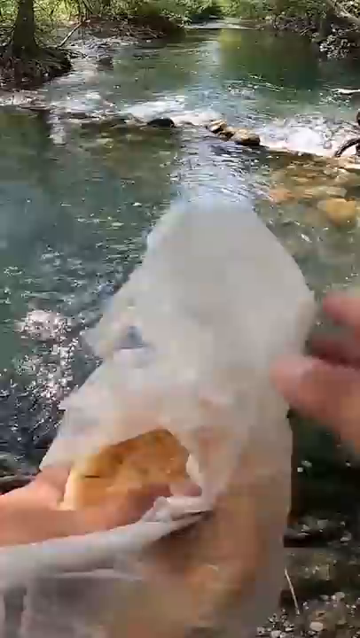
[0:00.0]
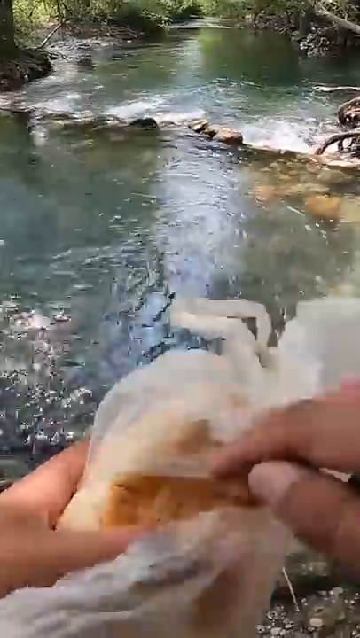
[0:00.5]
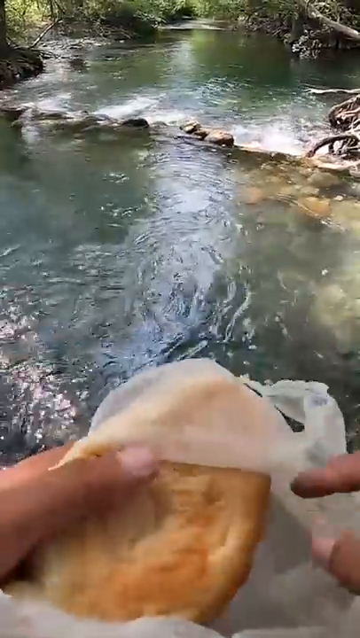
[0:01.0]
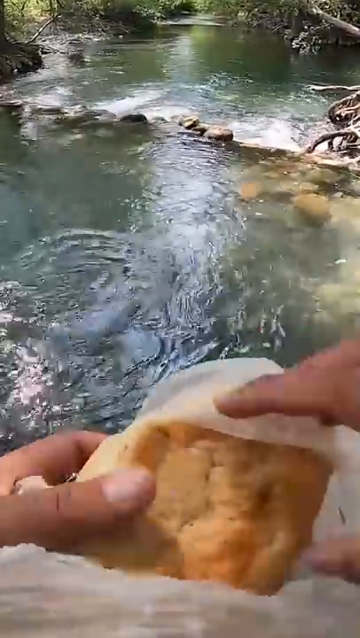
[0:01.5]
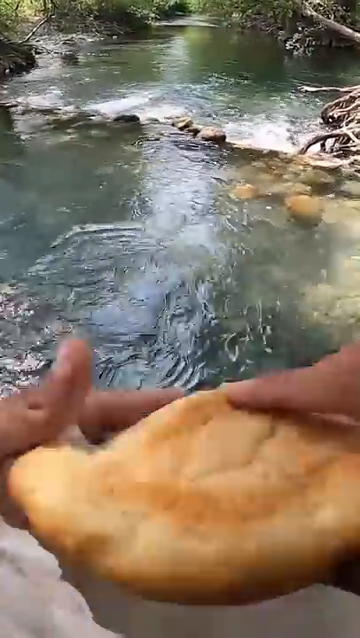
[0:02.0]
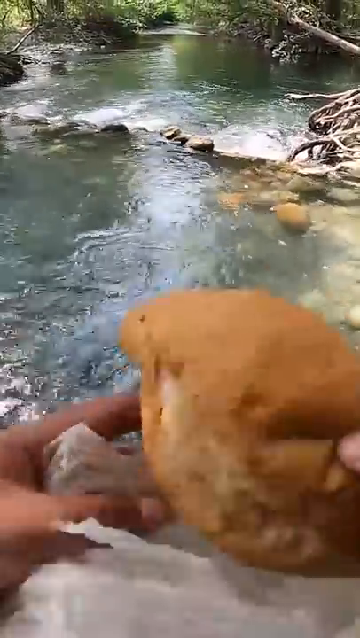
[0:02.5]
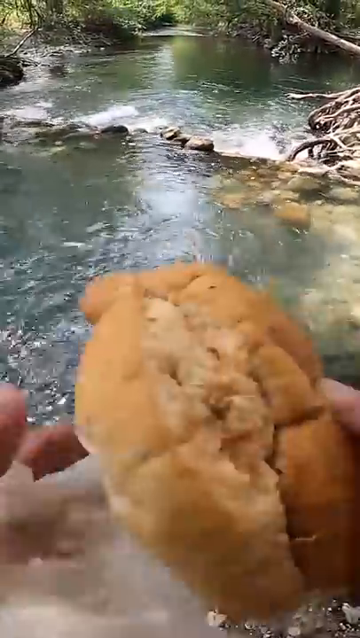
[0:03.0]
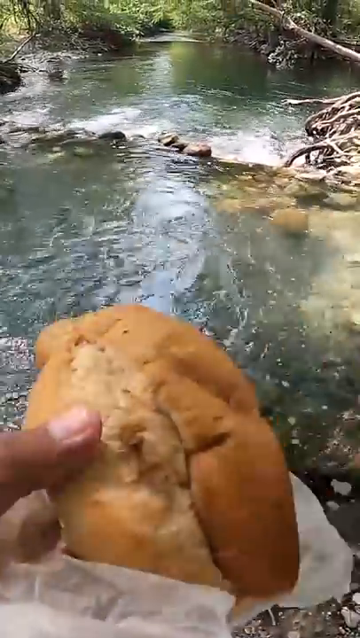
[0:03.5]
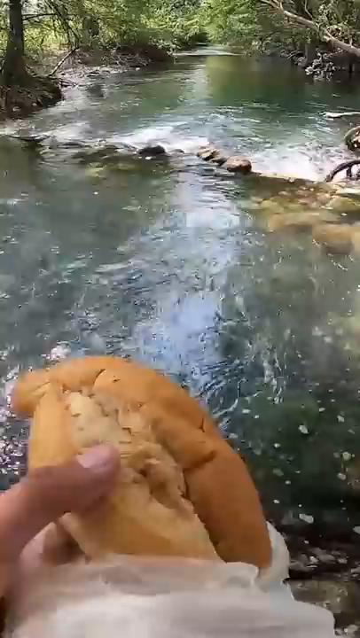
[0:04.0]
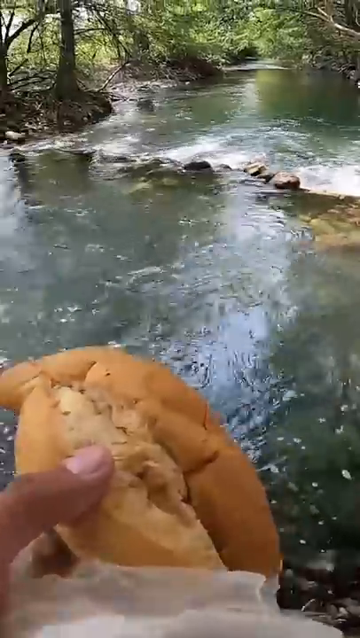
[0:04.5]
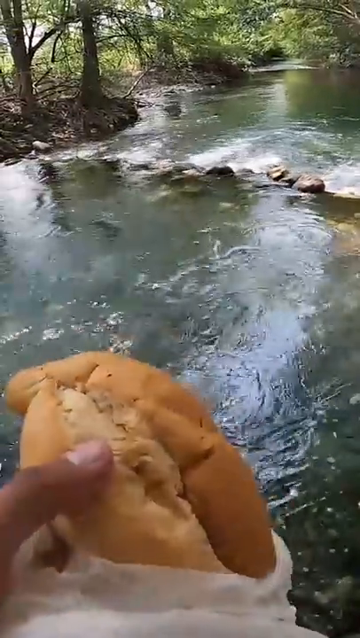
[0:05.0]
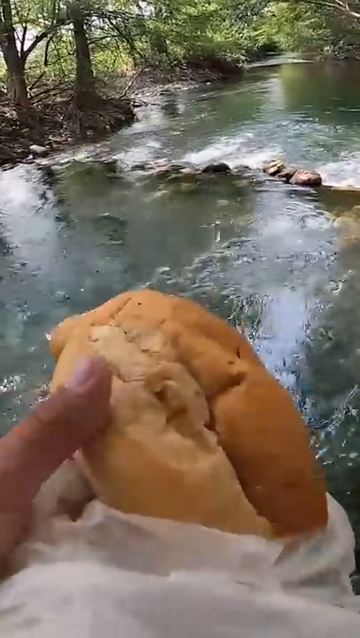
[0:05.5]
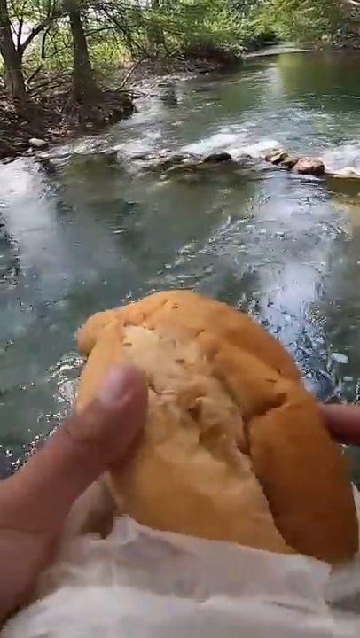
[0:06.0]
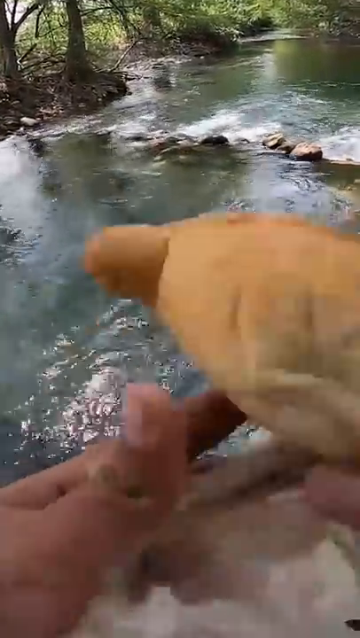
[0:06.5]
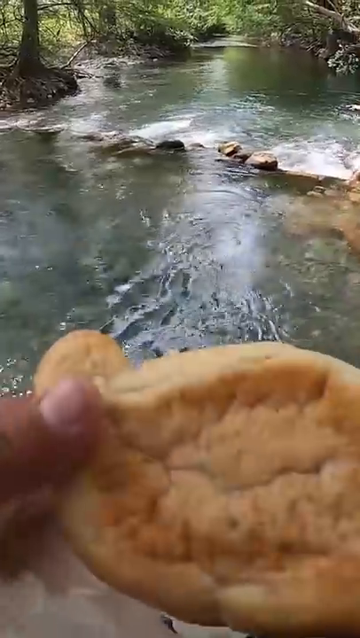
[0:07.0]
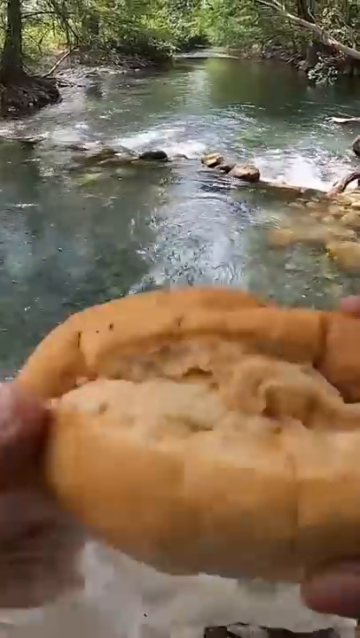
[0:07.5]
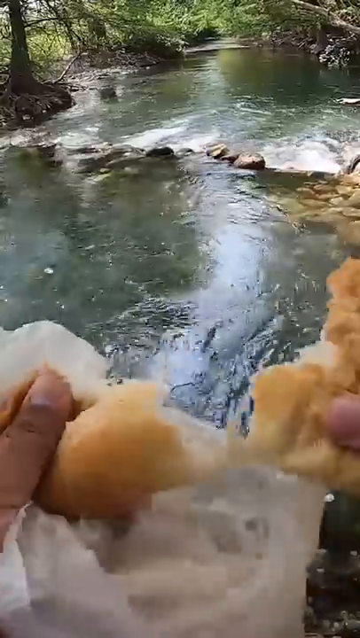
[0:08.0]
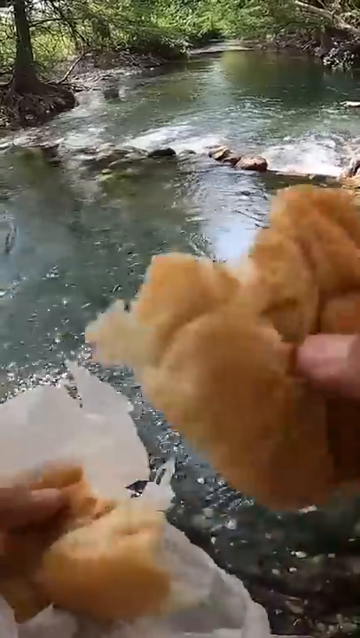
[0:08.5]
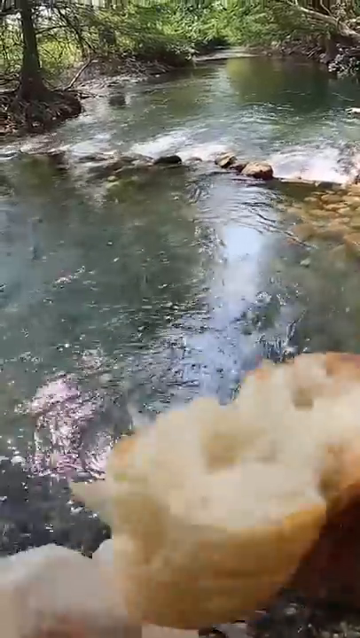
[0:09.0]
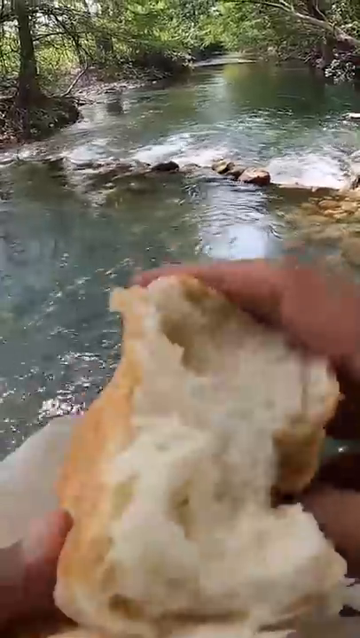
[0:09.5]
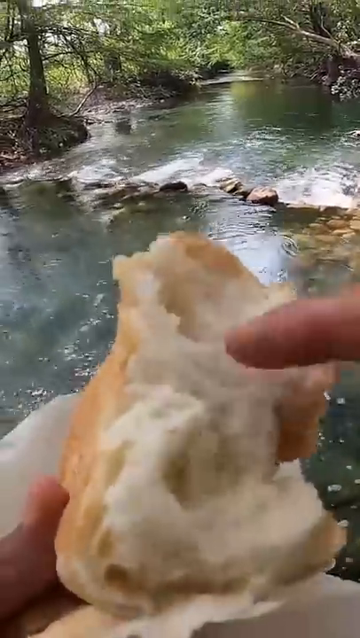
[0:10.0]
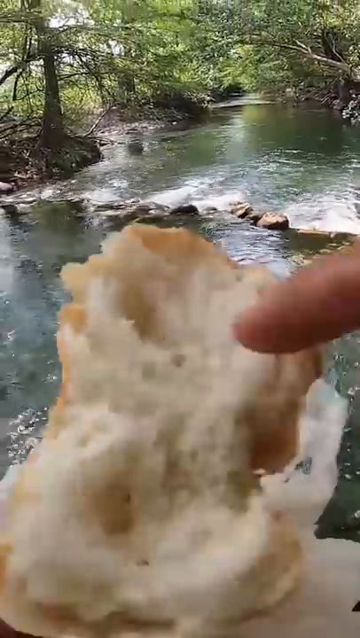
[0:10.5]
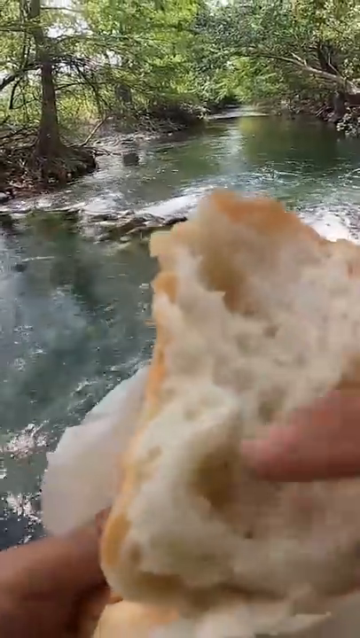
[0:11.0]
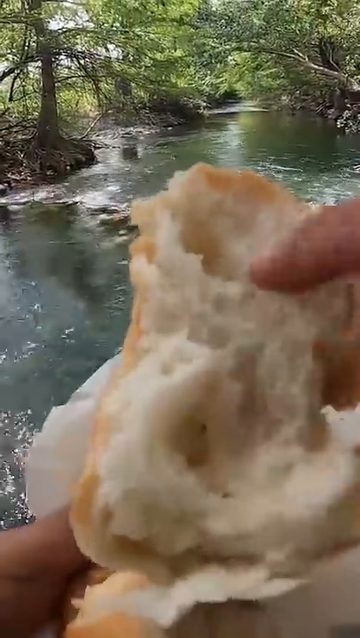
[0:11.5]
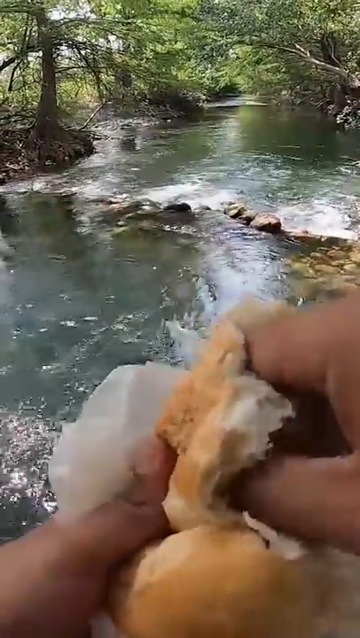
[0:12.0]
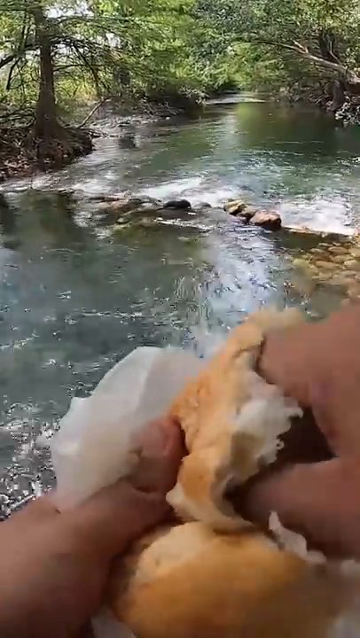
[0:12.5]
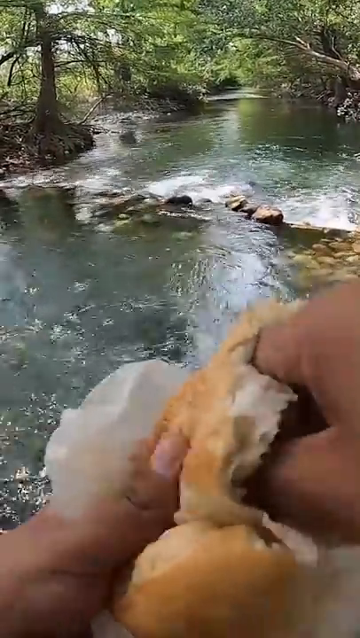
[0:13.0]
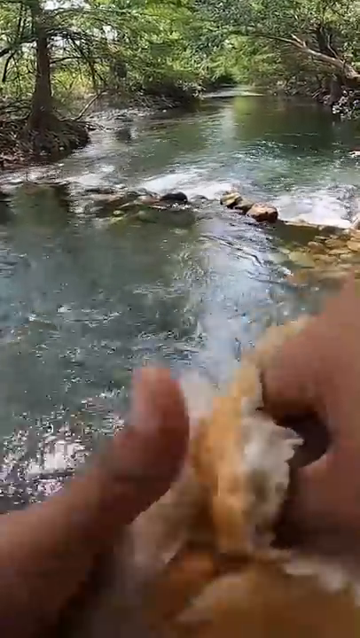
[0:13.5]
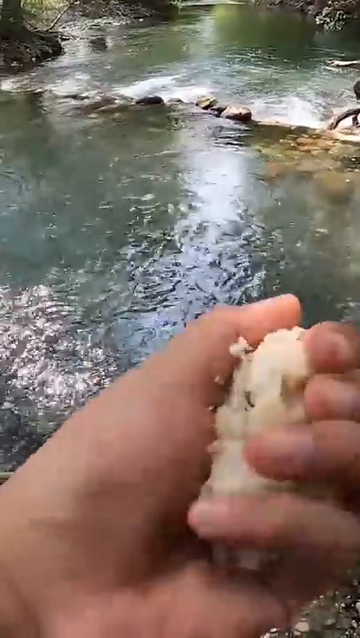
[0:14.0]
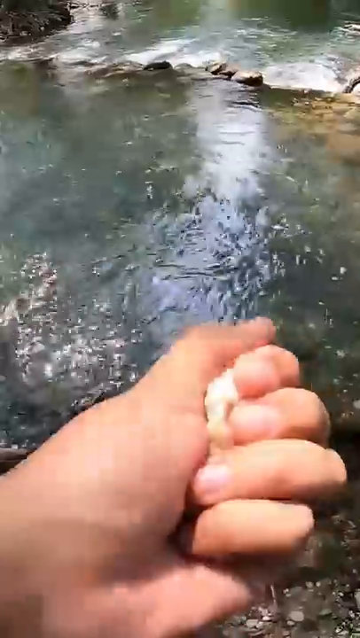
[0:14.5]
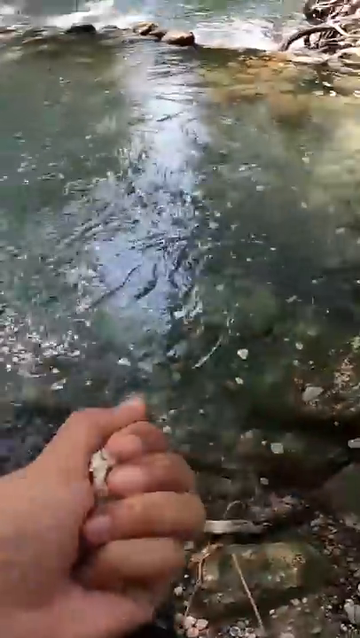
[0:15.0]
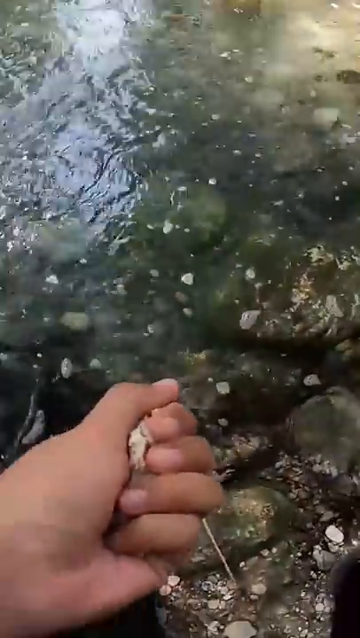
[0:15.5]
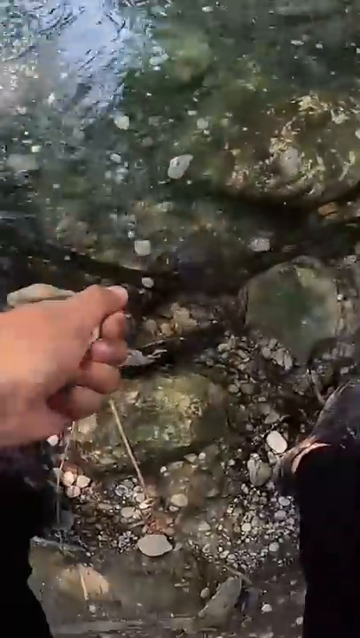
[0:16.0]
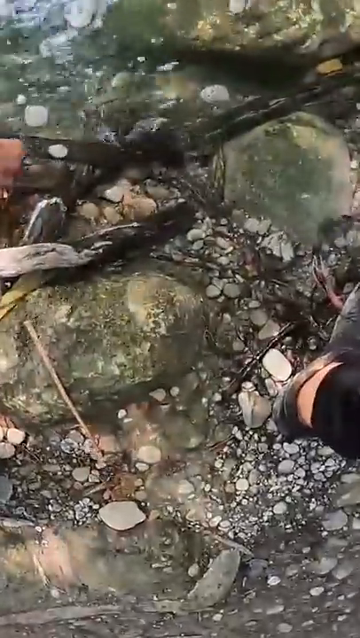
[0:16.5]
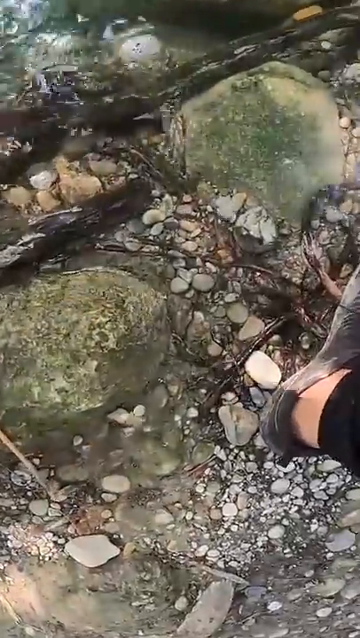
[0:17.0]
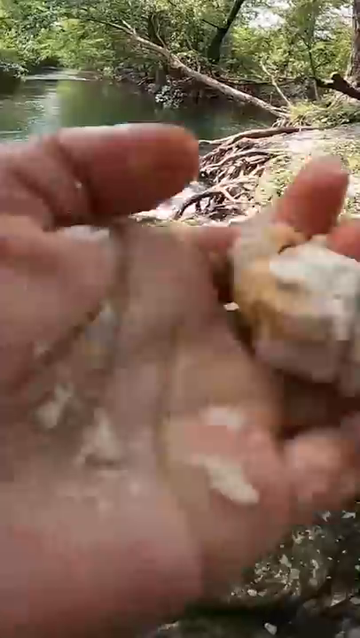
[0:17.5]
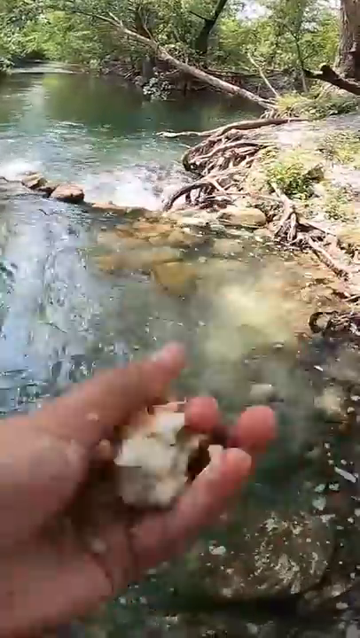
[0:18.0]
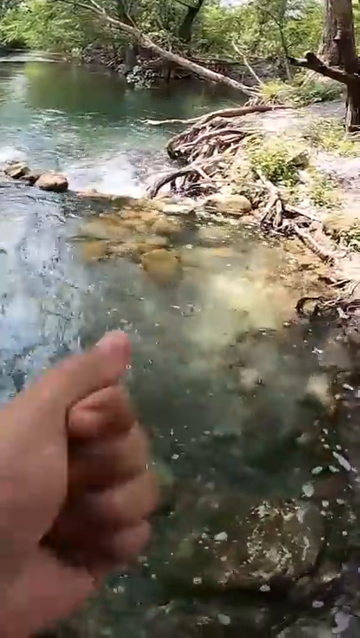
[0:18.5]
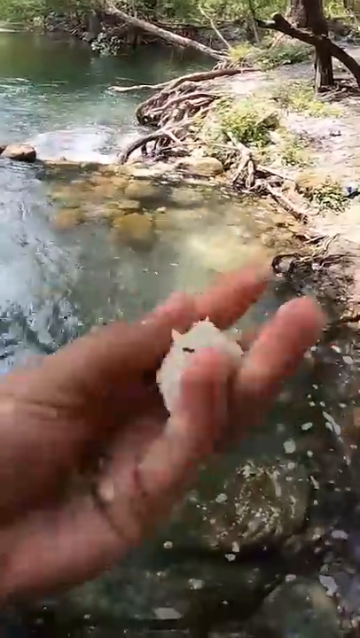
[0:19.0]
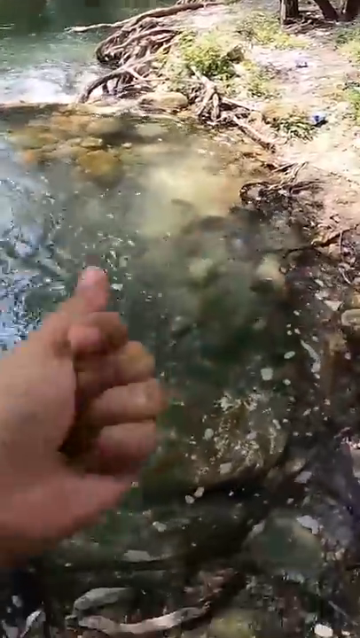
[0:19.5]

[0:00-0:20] The video is about how to fish mojaras, a certain type of fish, and on-screen text says "muy facil." The person stands at the shallow part of a river, where there is a little rocky pool with a drop-off. They hold a soft piece of white bread, like a roll, tear it open, pull the inside out, put it in the water to wet it, and then make it into a ball. Only the person's hands are visible, and their gender and age are unclear, though they seem pretty young since their hands aren't wrinkly. Toward the end, their feet come into view as they bend down to the river, showing simple black leggings and sneakers. In the corner the letters "PD" appear, possibly the mark of a fishing channel.